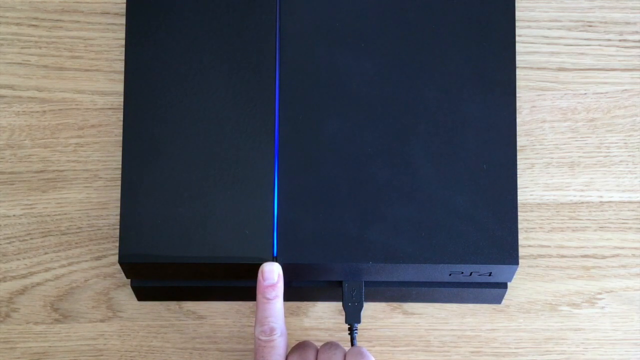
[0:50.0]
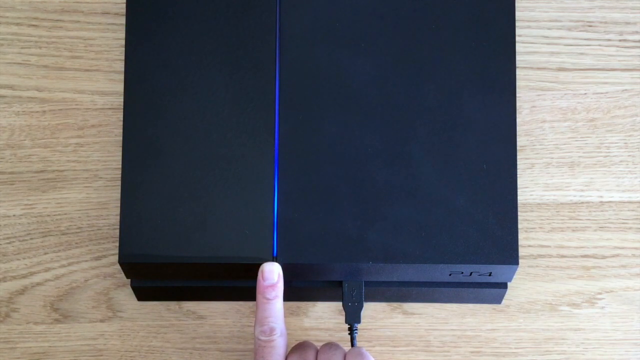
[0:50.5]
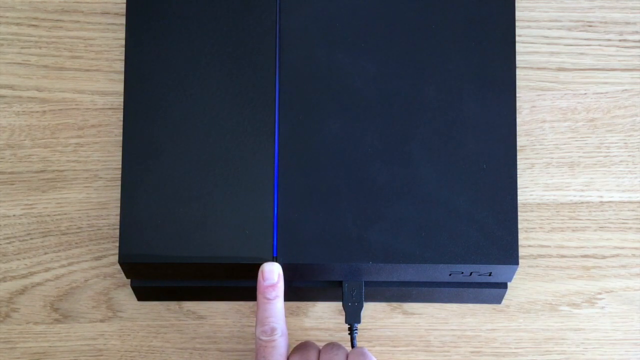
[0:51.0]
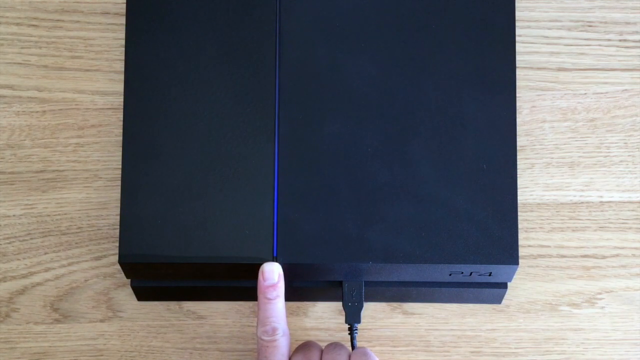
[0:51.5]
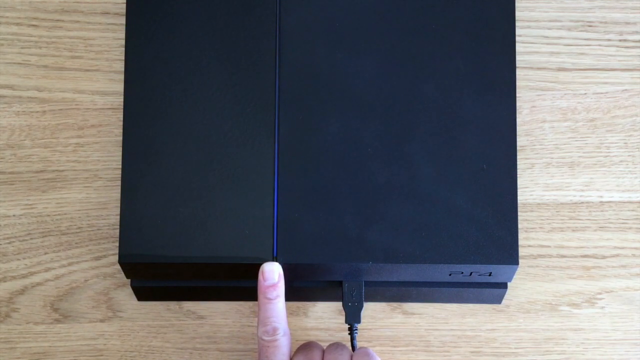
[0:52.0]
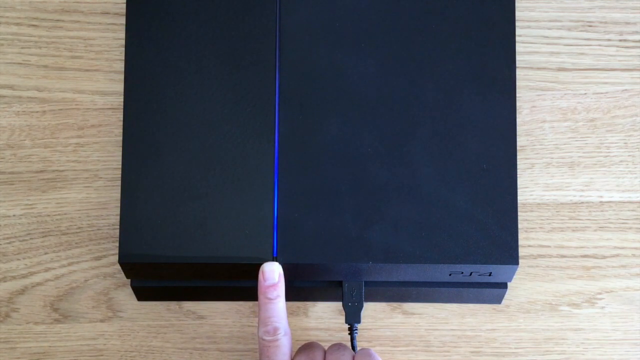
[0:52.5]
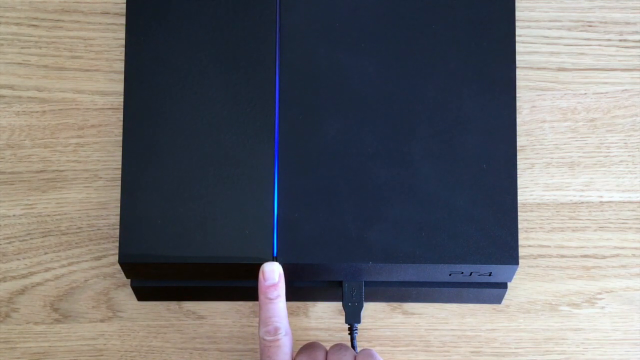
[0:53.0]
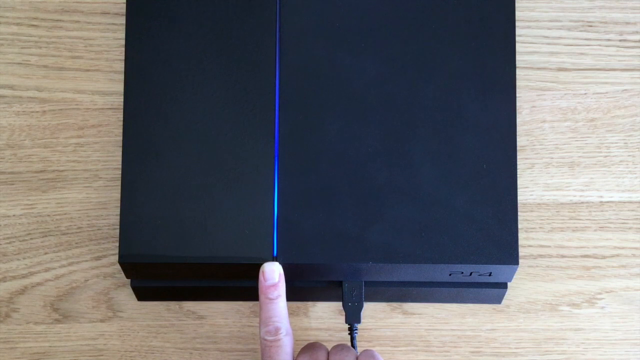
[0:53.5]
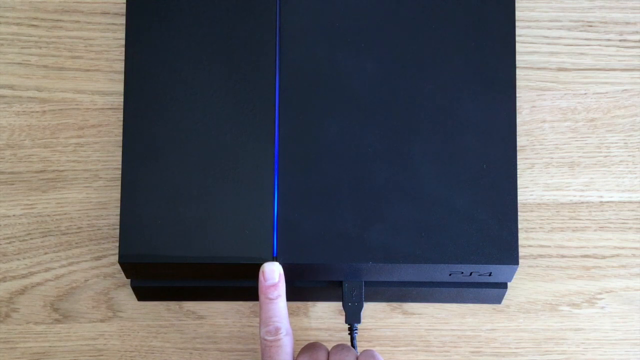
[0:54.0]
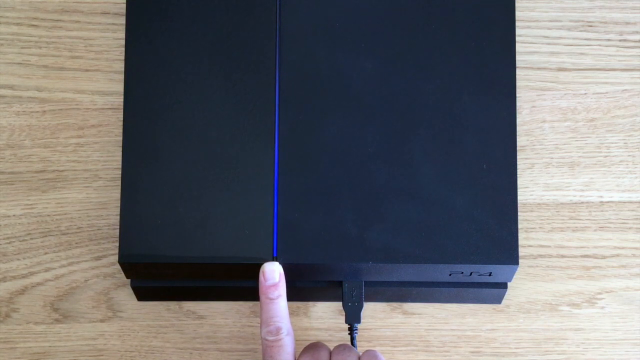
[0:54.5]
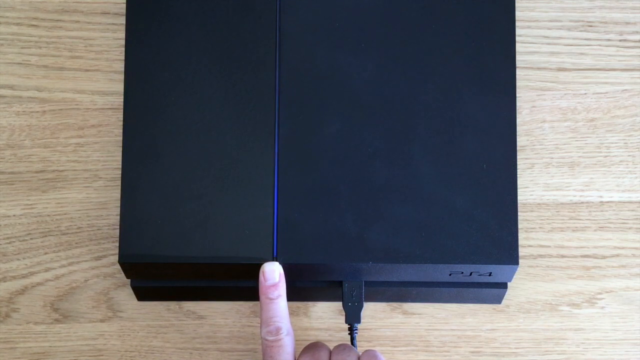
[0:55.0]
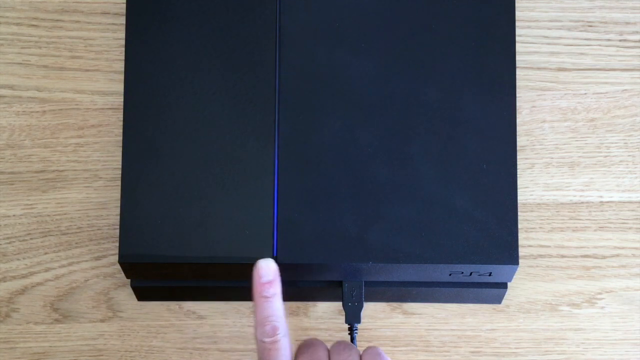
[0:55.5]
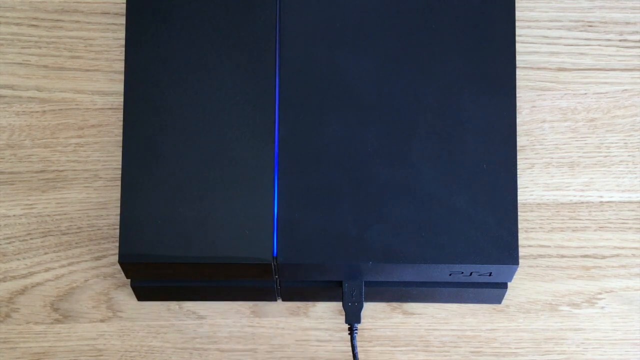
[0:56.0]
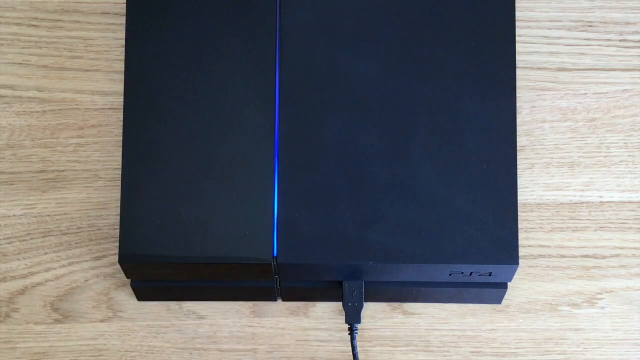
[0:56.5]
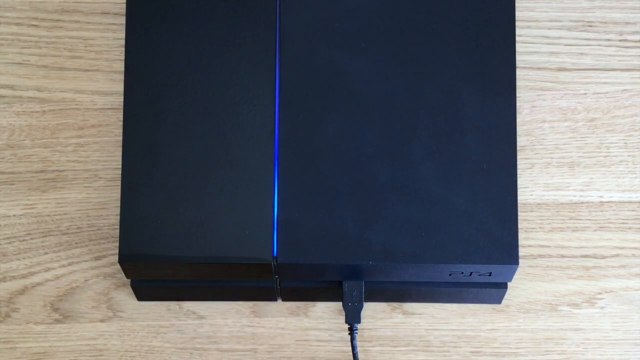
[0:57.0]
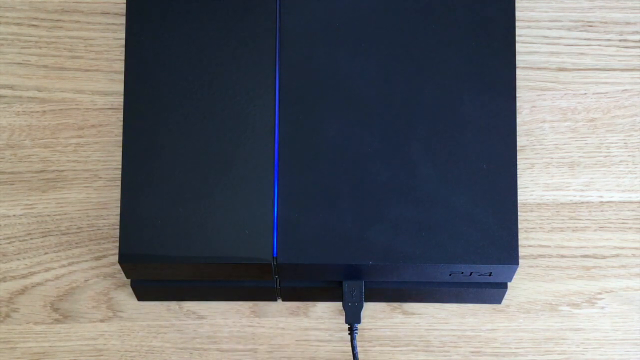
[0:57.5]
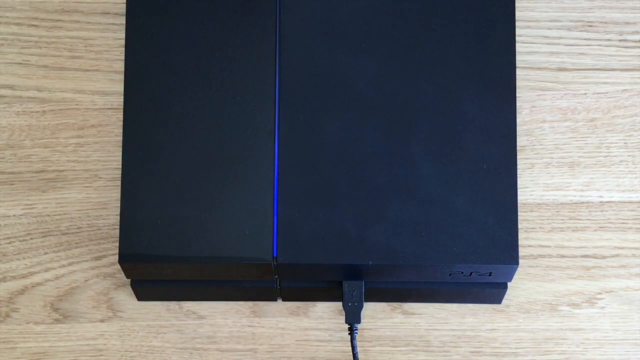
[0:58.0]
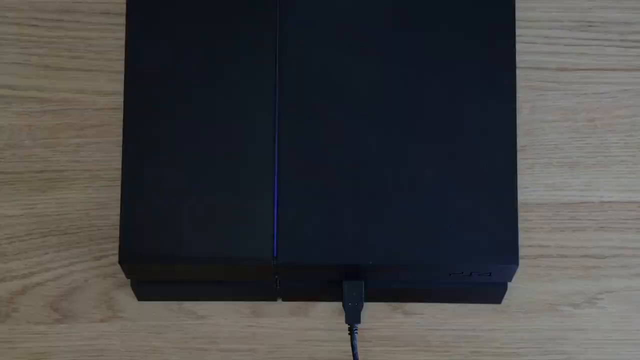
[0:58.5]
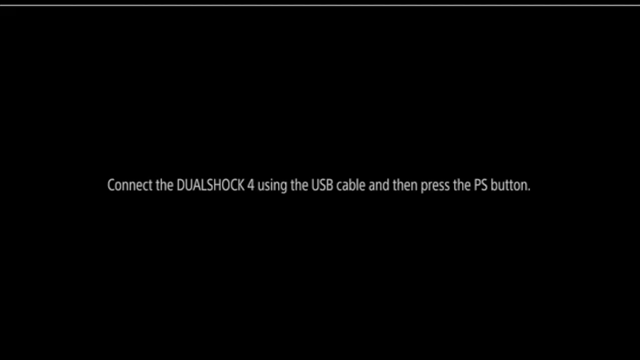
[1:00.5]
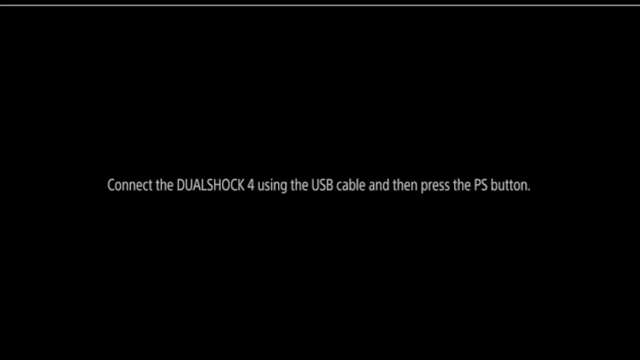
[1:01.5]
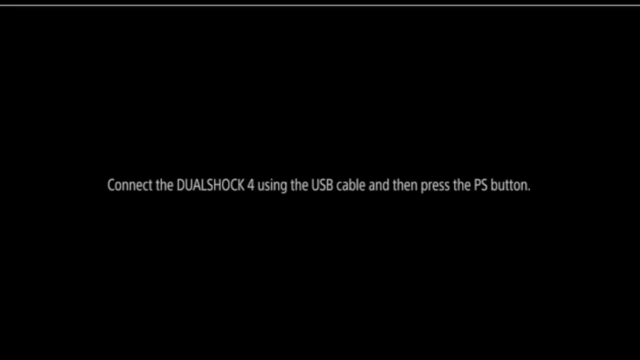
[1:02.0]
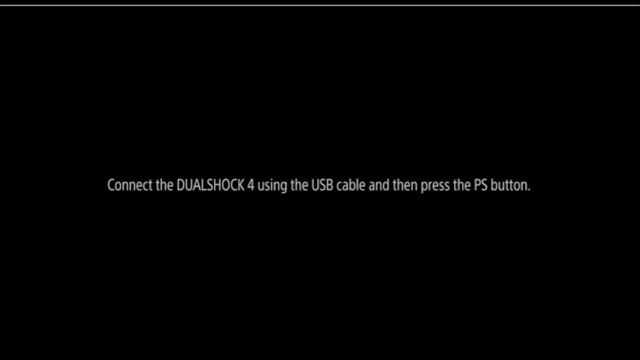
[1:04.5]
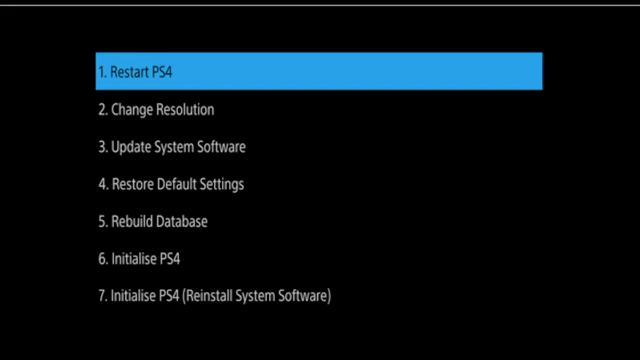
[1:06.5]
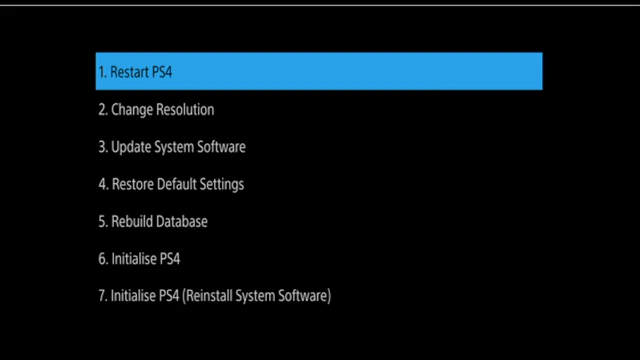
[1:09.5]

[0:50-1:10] The PlayStation lights up in blue while the individual's index finger is still on the PlayStation 4 where the light comes from; they then pull their hand back. A black screen appears with static white text in the center reading "connect the DualShock 4 using the USB cable and then press the PS button." Next, a list of options numbered 1 through 7 appears: "Restart PlayStation 4", "Change Resolution", "Update System Software", "Restore Default Settings", "Rebuild Database", "Initialize PS4" and "Initialize PS4 (Reinstall System Software)". The first option is highlighted in dark blue, while the other options remain in solid white text with nothing around them other than the black background.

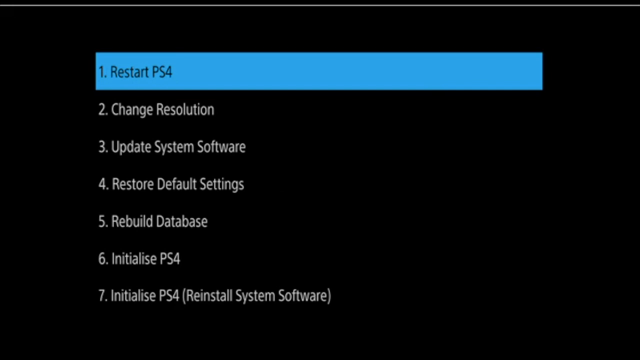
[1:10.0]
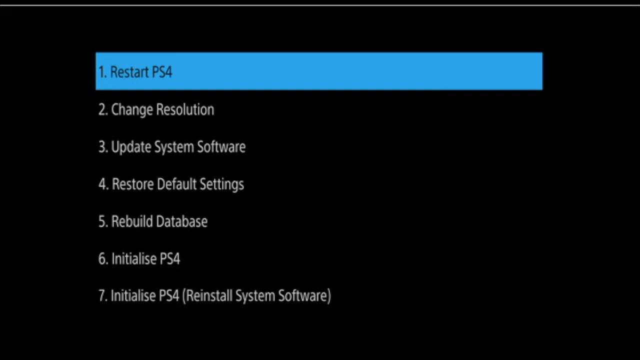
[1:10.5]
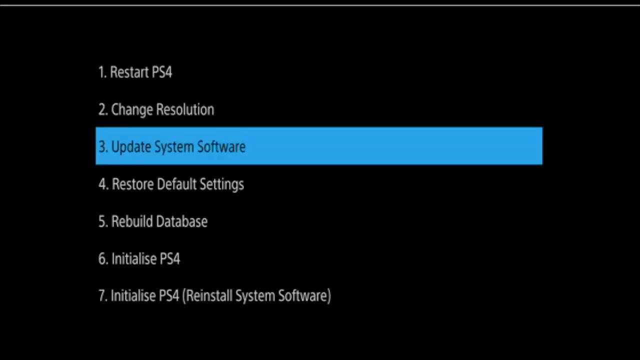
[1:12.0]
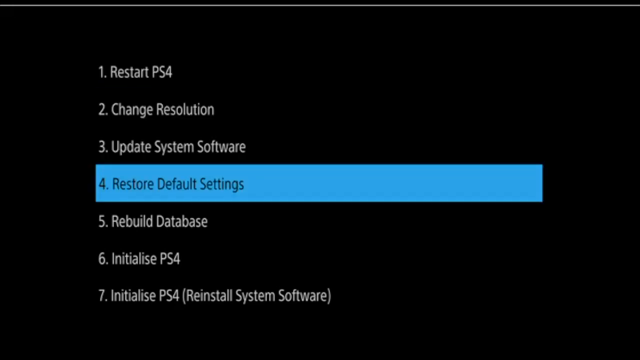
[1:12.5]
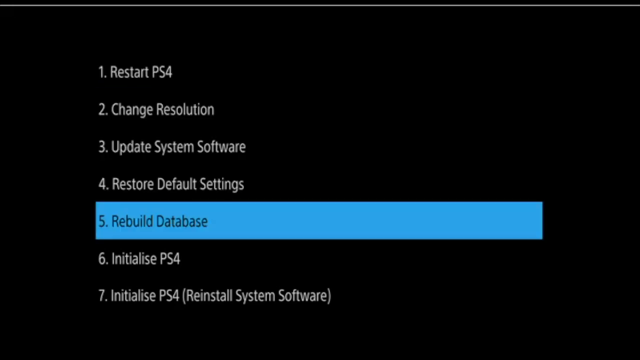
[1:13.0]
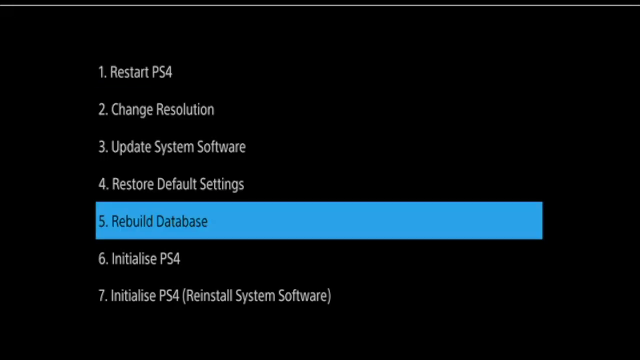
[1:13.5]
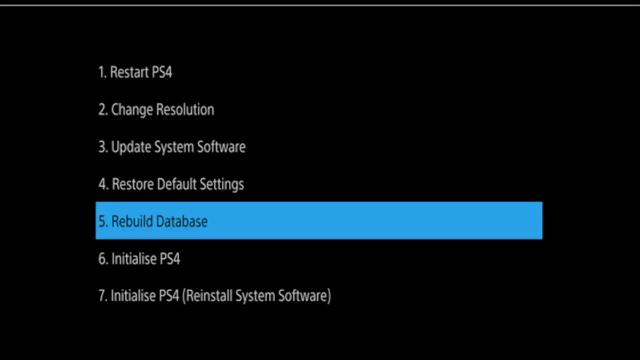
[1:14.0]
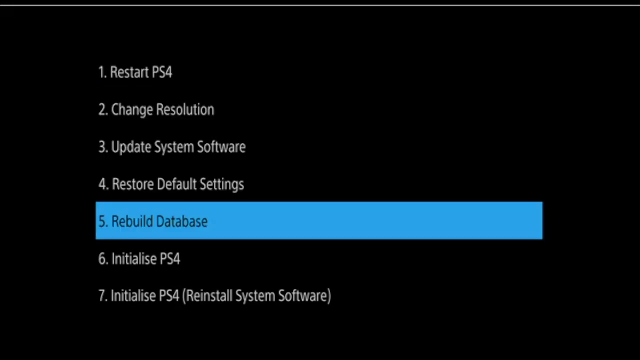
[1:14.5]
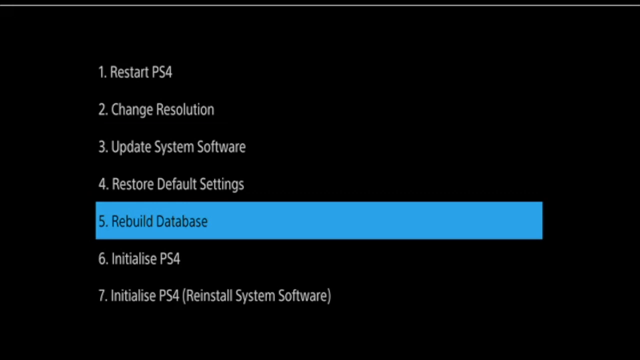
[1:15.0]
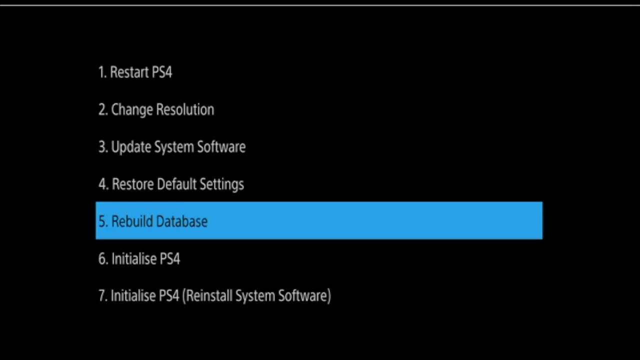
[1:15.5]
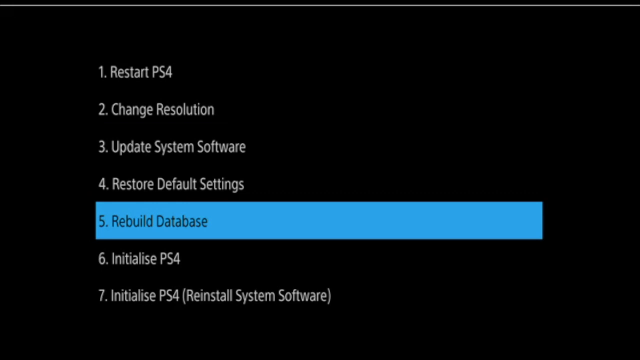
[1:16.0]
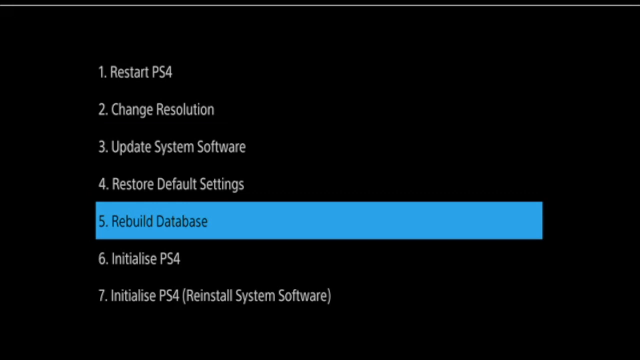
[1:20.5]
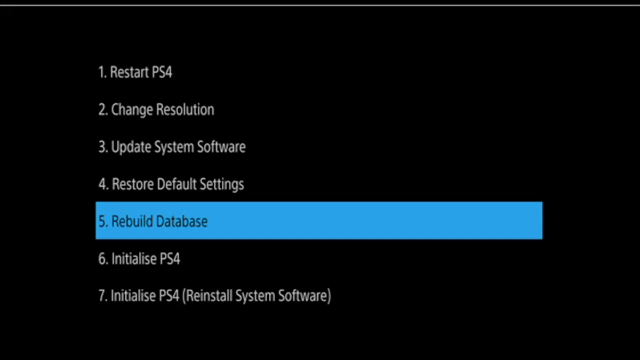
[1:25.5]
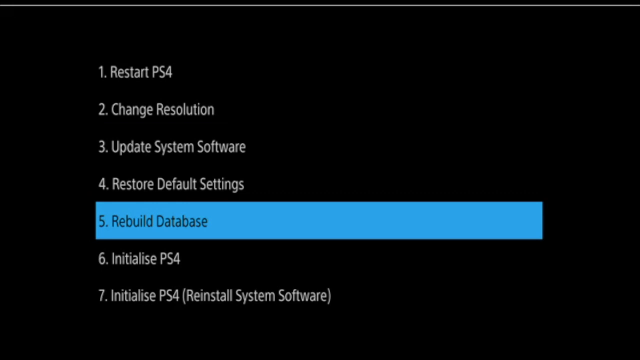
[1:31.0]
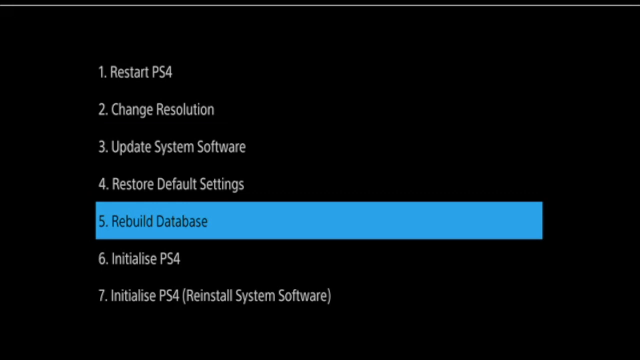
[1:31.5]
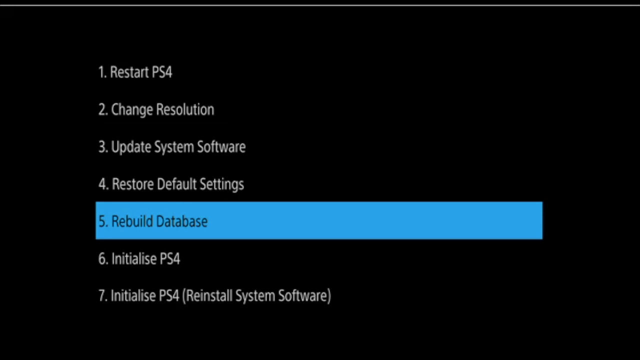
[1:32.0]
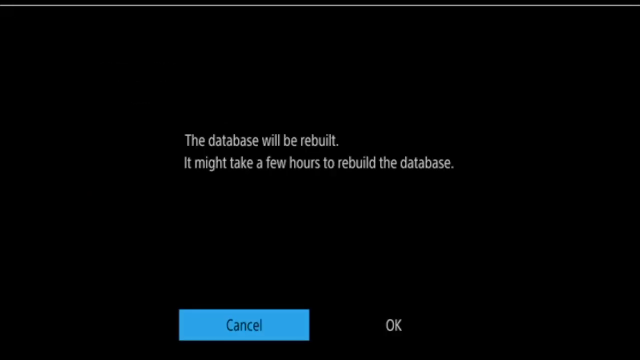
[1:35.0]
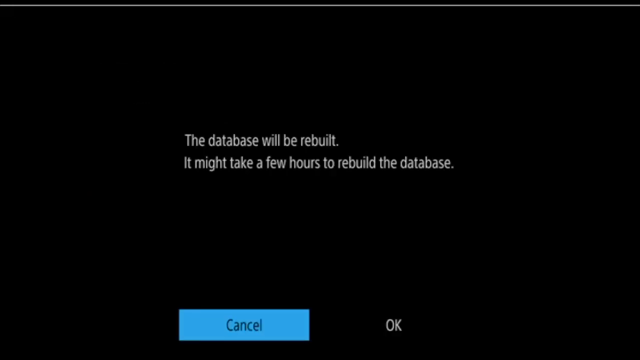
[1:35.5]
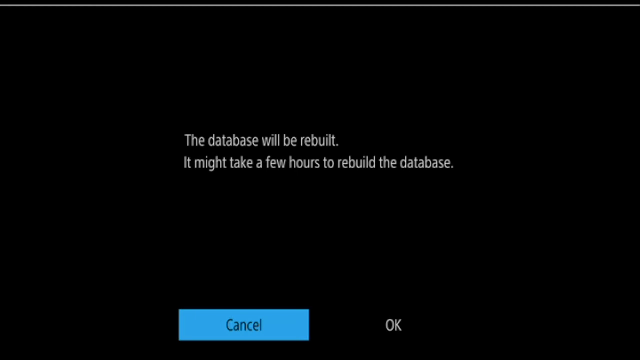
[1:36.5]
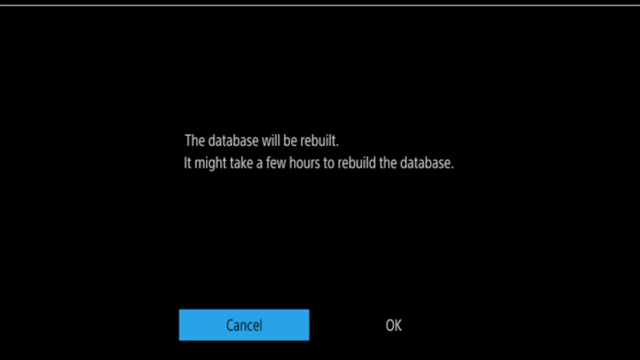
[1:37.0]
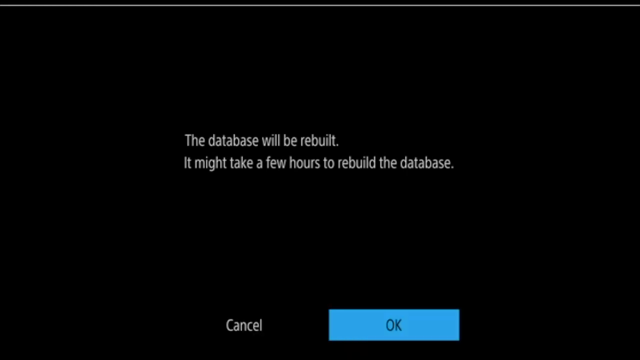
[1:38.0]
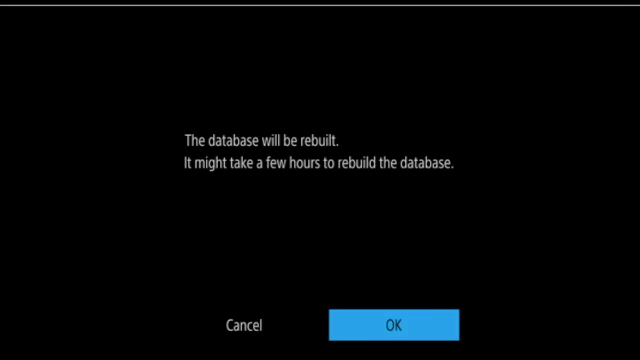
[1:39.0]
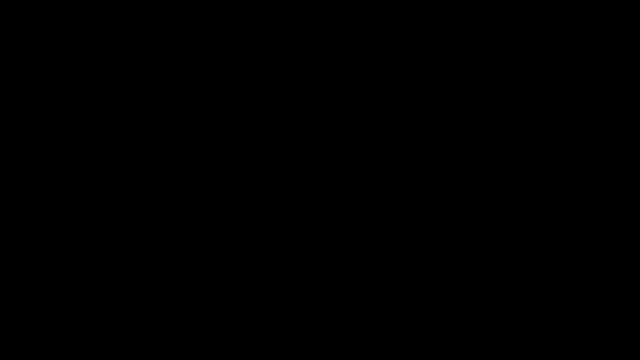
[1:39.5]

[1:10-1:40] The selected option is marked by a long baby blue rectangle. The highlight scrolls down through the options, from the first, restart PS4, to the second, change resolution, the third, update system software, the fourth, restore default settings, and the fifth, rebuild database, where it stays for a couple of seconds. Unselected options are in white text, while the selected option turns to black text and returns to white once it is no longer selected. White text then appears reading "the database will be rebuilt. It might take a few hours to rebuild the database," with two options at the bottom left: cancel and okay.